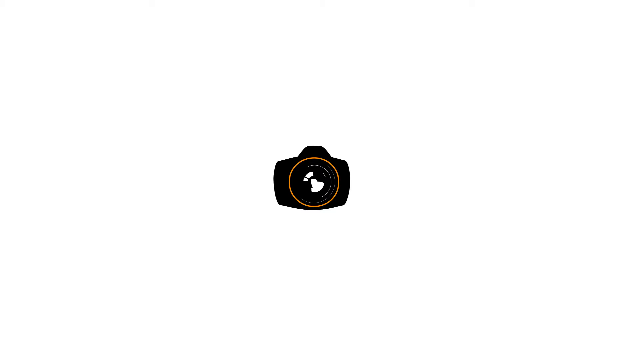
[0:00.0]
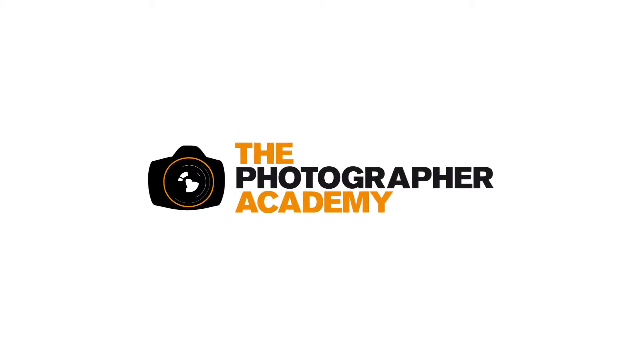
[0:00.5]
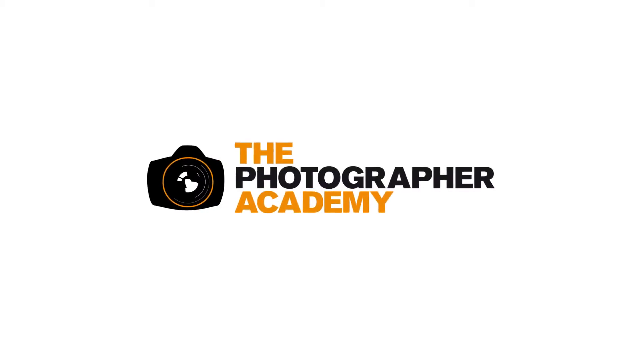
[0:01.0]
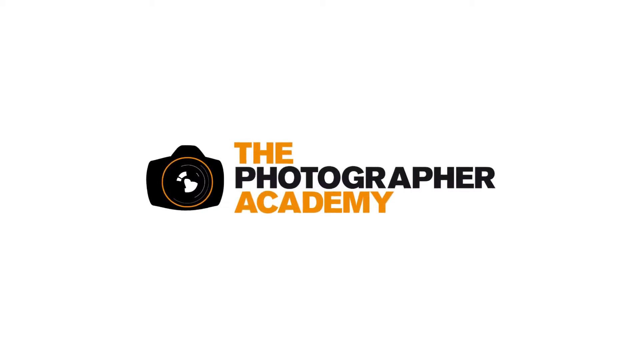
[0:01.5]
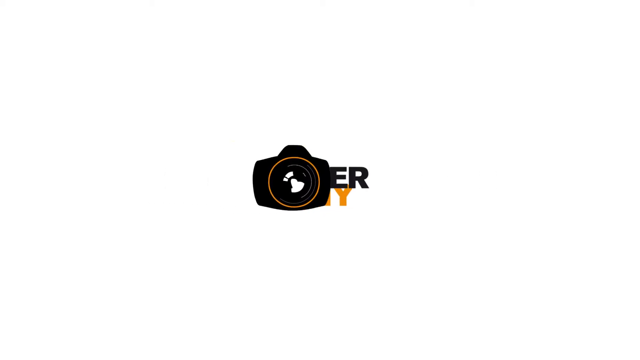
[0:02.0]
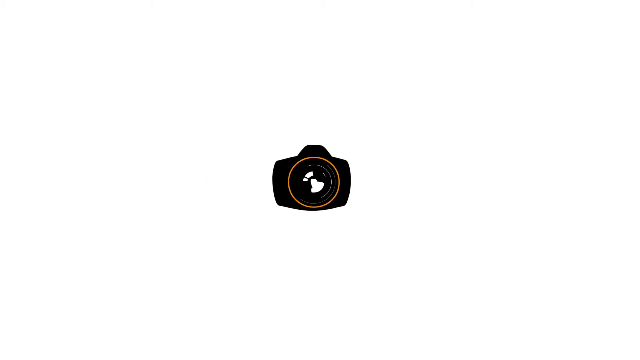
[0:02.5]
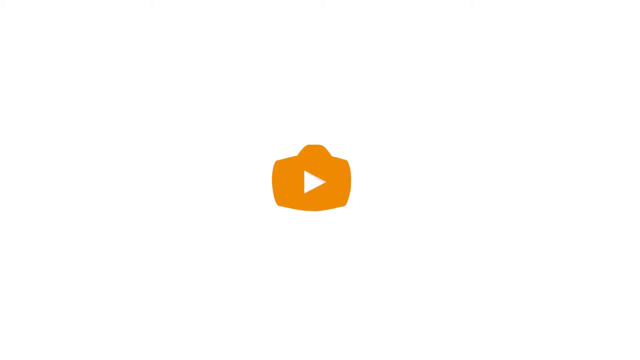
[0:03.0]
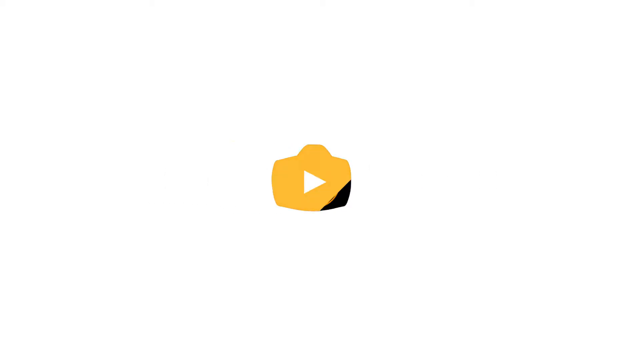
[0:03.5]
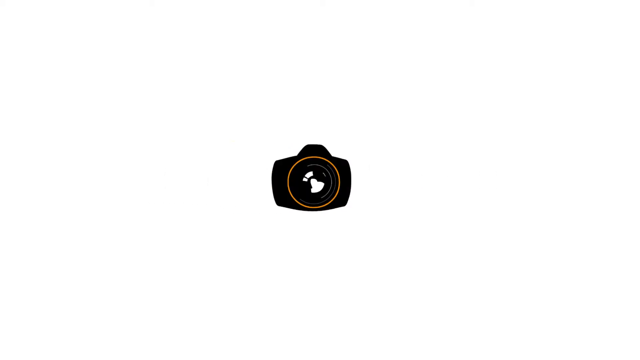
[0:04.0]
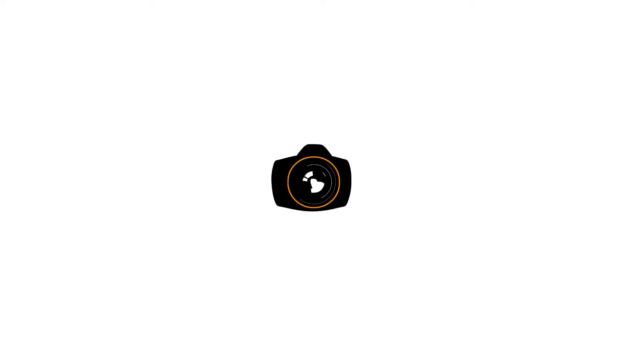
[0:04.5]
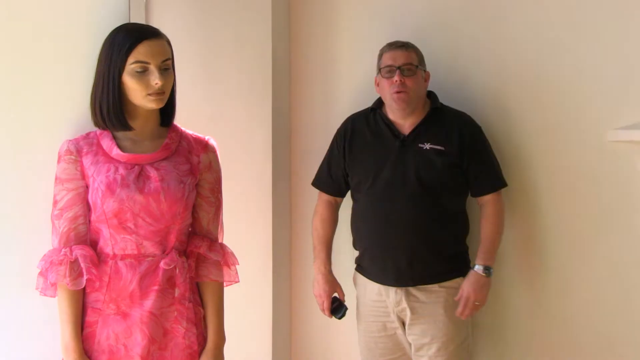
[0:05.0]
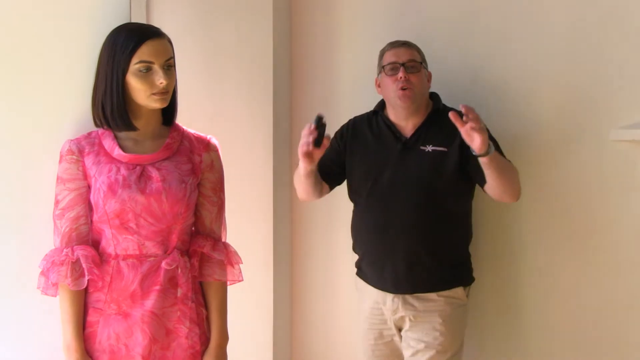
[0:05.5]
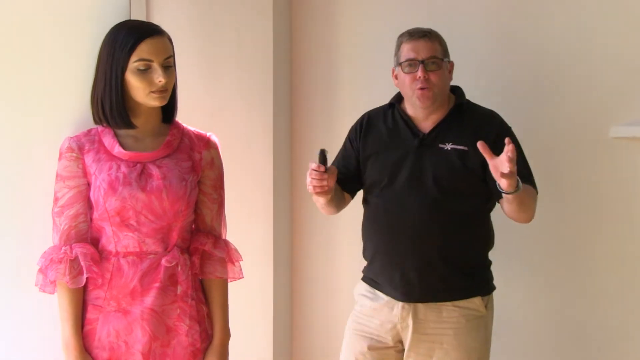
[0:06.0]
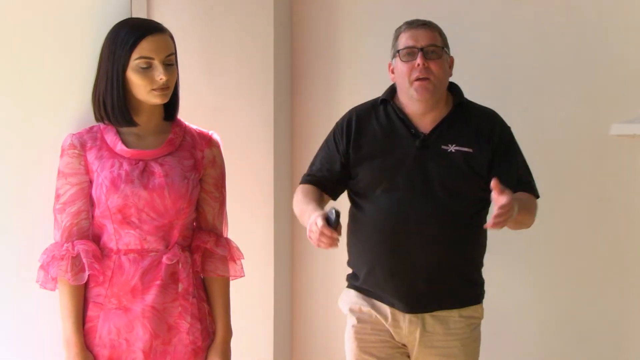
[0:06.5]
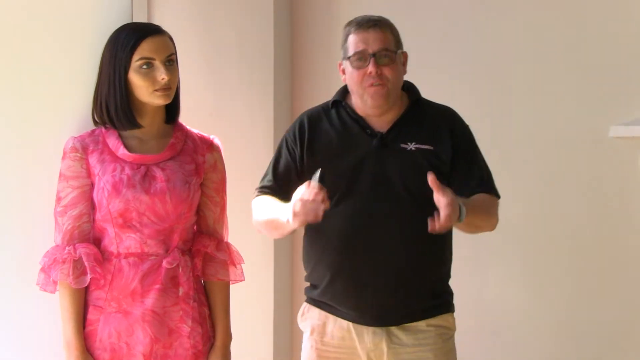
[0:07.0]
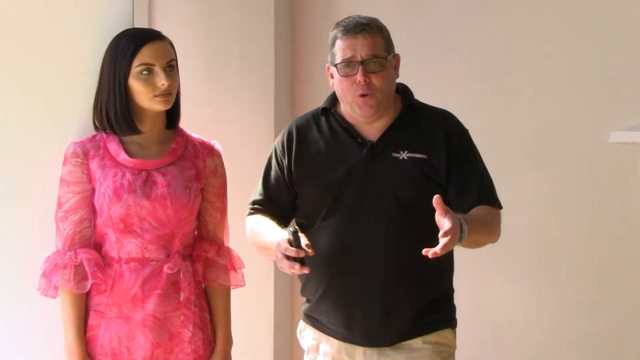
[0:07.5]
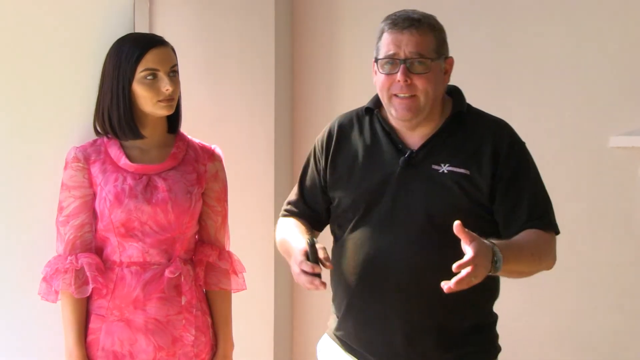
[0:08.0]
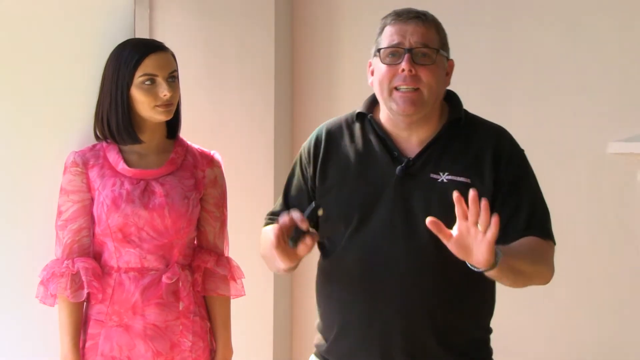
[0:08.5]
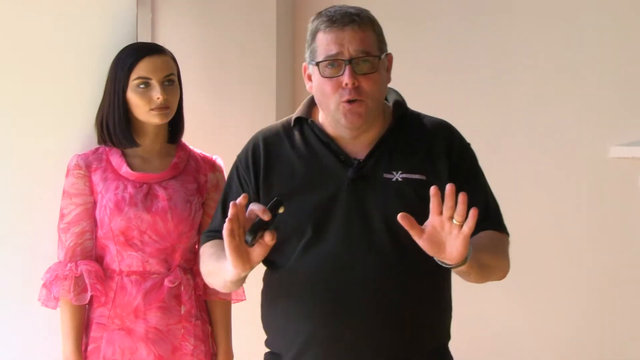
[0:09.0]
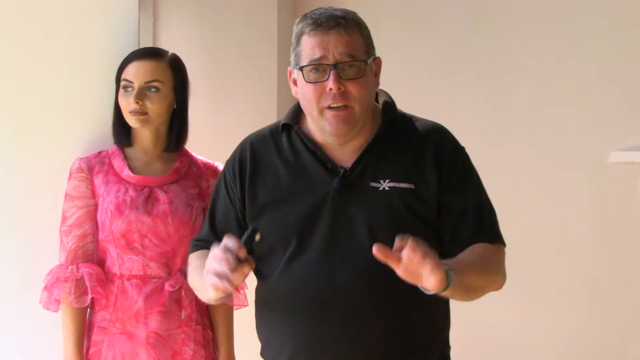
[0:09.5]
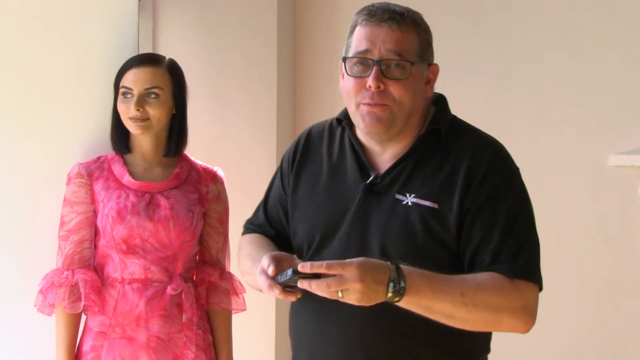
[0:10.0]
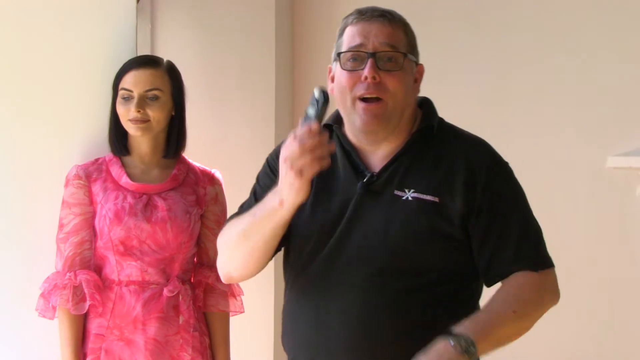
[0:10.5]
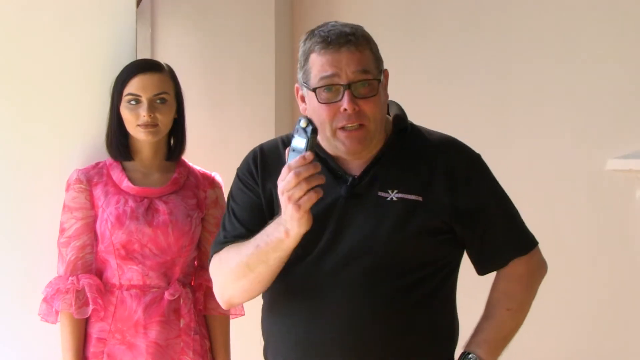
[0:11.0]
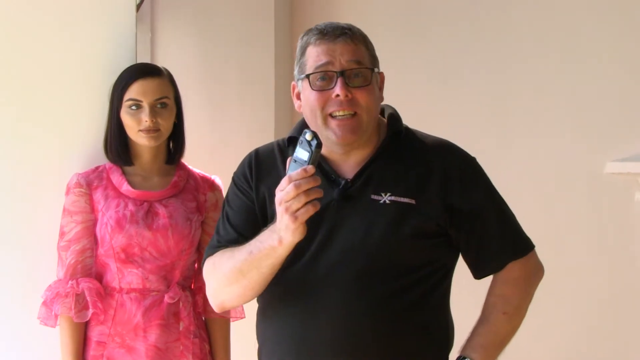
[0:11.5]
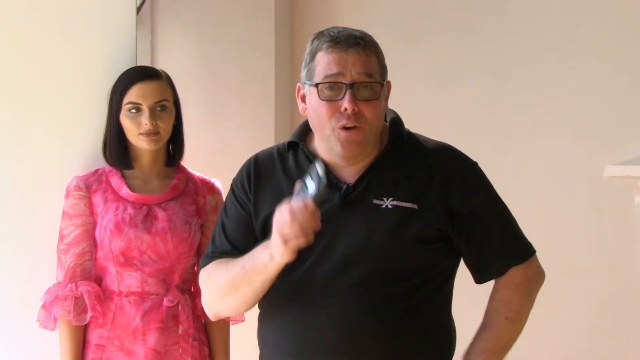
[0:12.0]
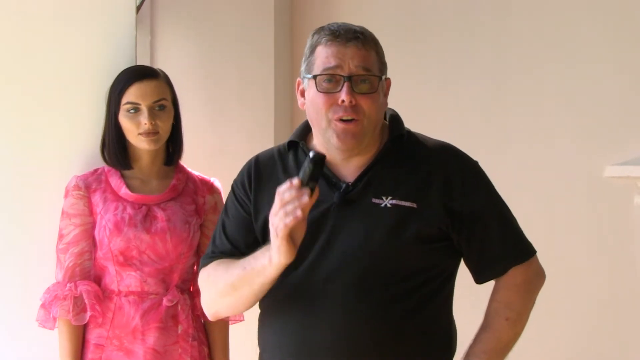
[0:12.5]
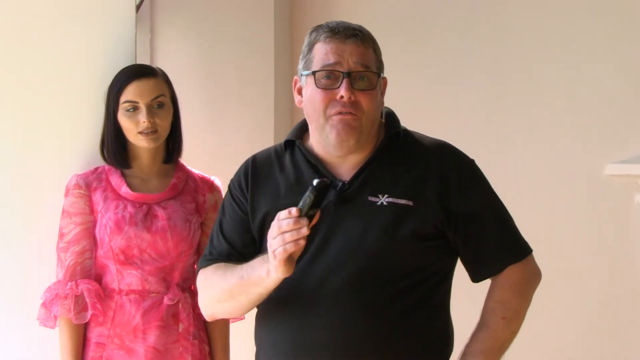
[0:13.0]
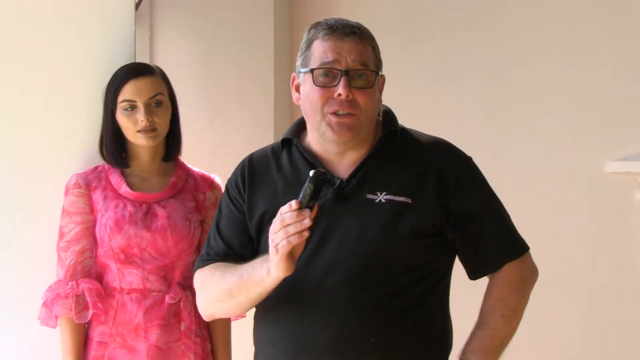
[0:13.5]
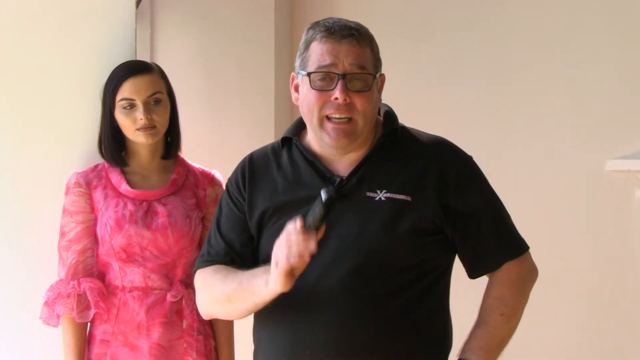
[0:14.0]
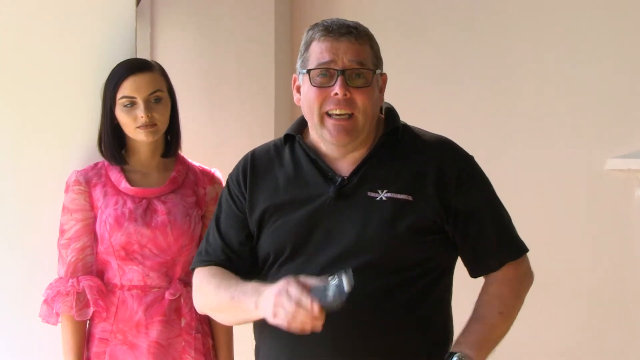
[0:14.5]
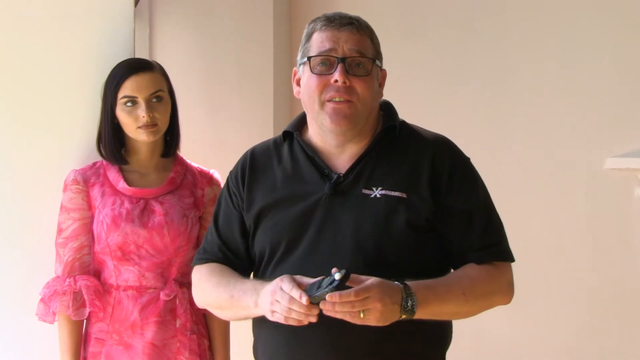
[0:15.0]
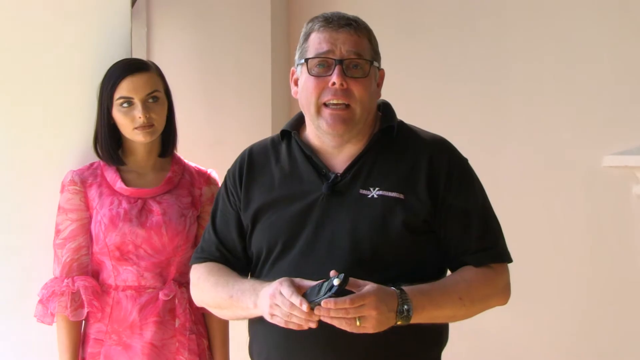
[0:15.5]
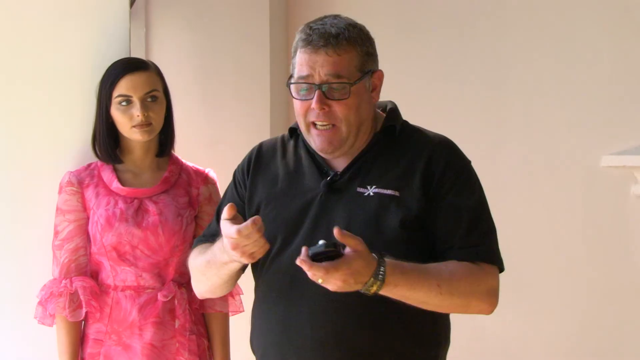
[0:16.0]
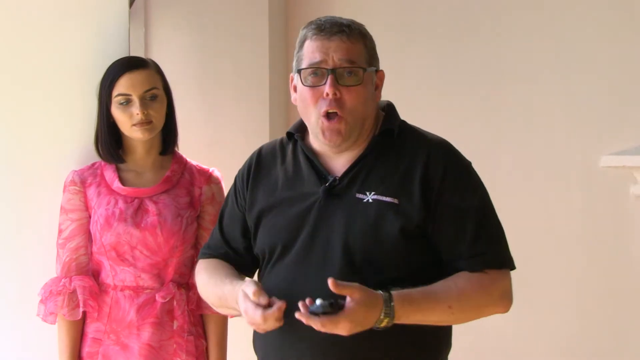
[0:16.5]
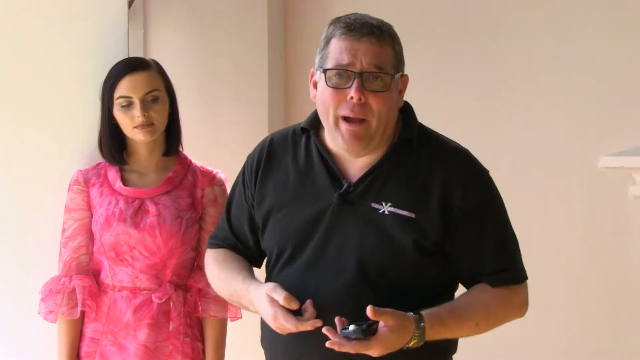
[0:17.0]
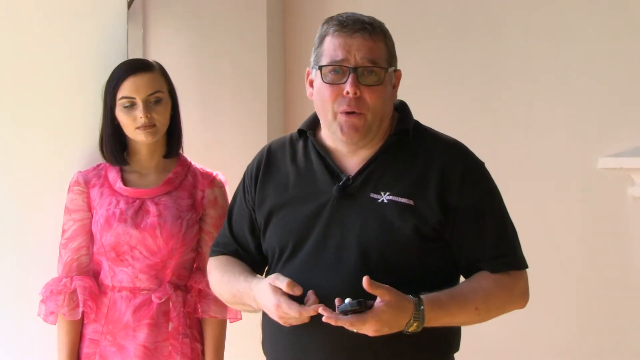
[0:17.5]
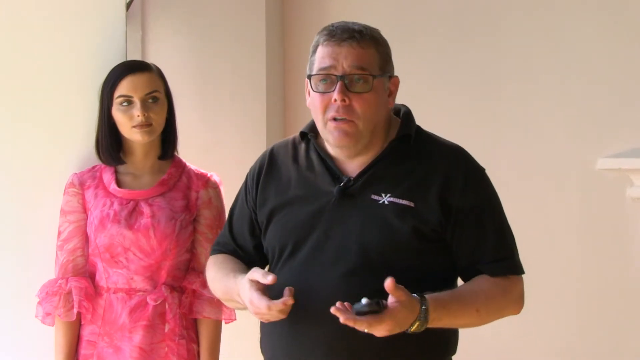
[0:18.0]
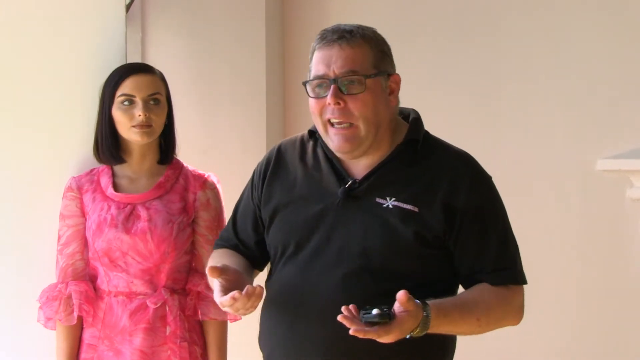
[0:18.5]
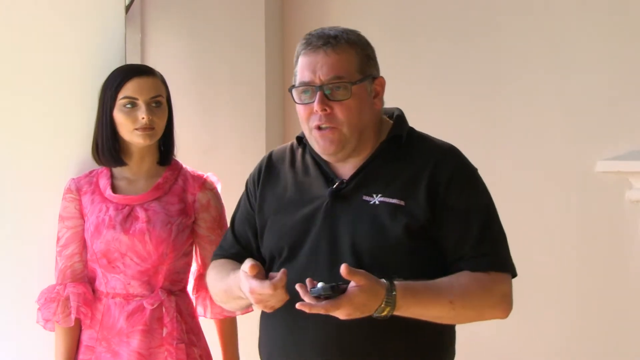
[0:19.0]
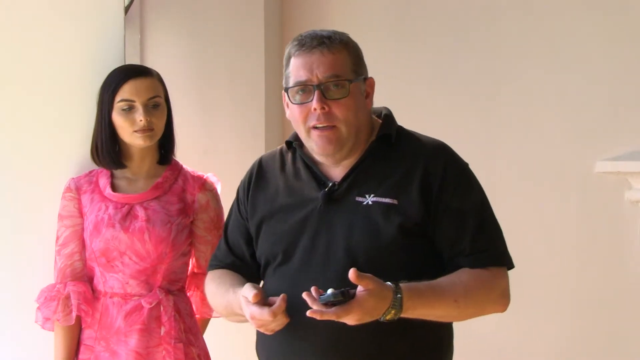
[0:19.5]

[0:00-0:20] The video opens with just a camera on the screen, then moves forward to the text "the photographer academy," and then the camera pops back up. A man in a black polo shirt starts talking while moving and shaking a device around. A woman in a pink dress is off to the side and slightly behind him; she is somewhat paying attention to what he is doing, smiling and standing there. He continues shaking the device and talking; the device seems to be what he is focused on, and he is apparently showing people how to use it. He twiddles his thumbs as if using the device to do something. The woman is still with him. He seems very taken with the device and somewhat excited about it, with lots of facial expressions.